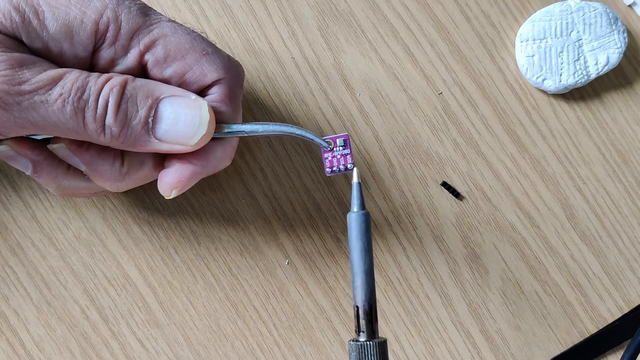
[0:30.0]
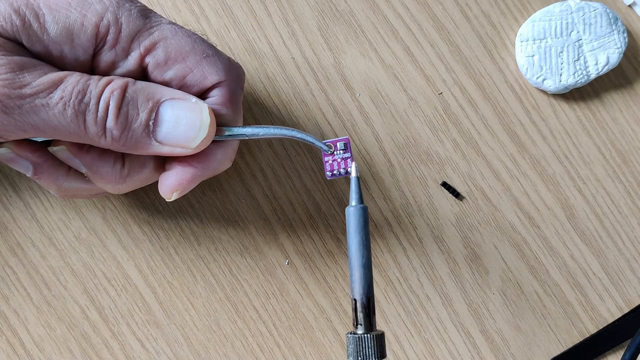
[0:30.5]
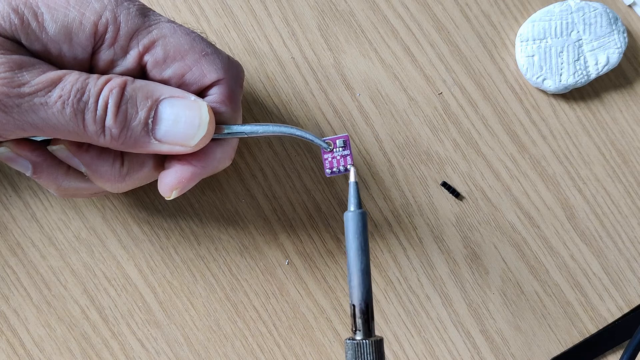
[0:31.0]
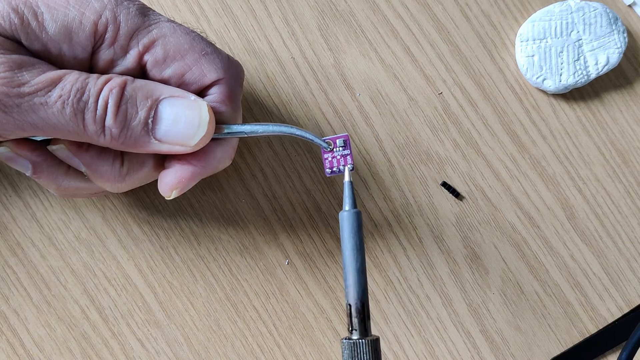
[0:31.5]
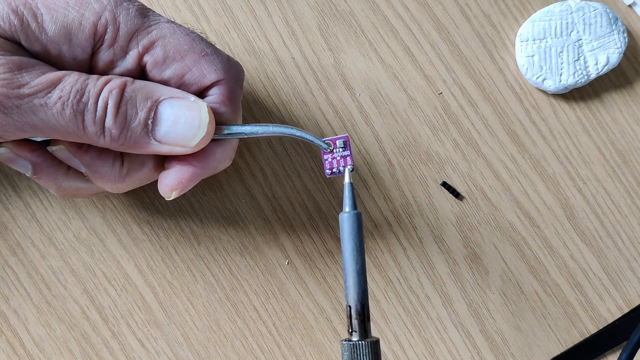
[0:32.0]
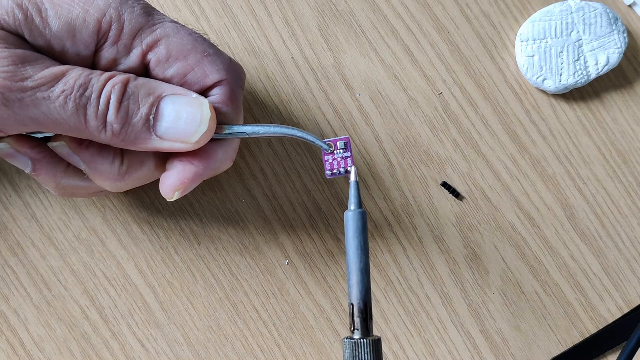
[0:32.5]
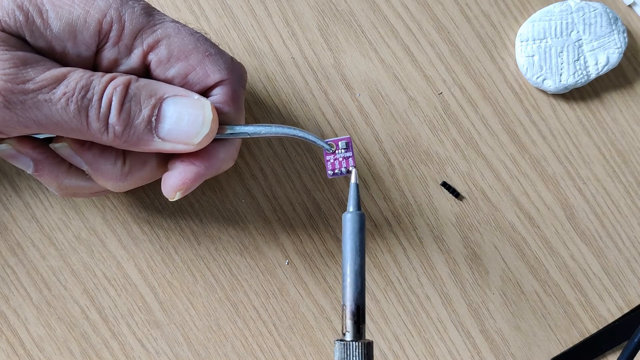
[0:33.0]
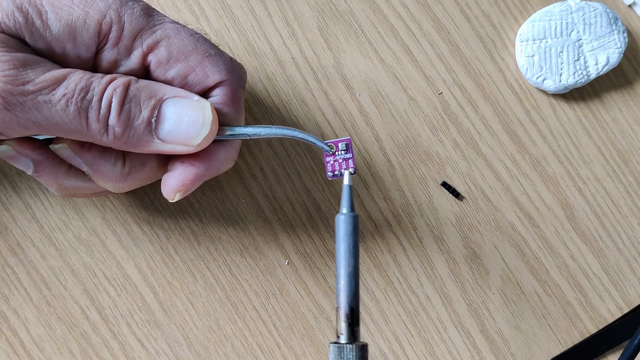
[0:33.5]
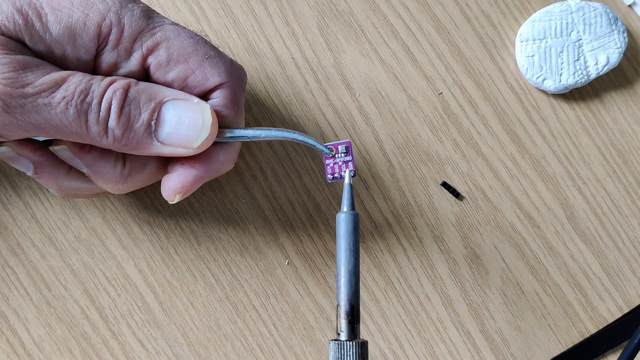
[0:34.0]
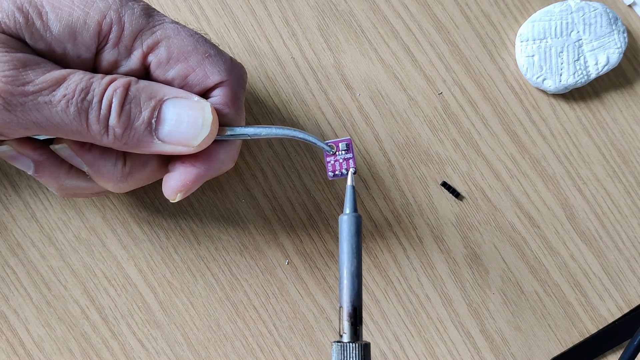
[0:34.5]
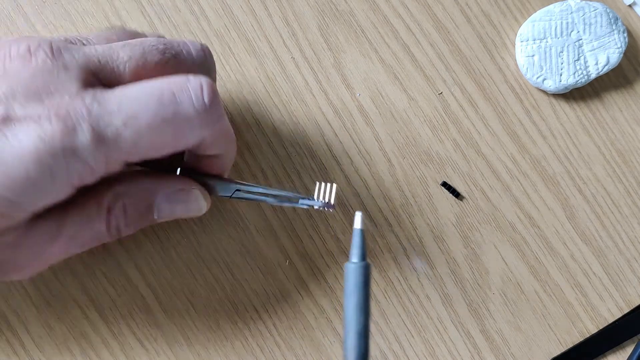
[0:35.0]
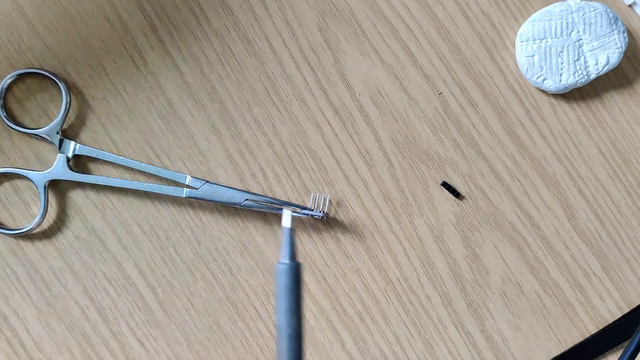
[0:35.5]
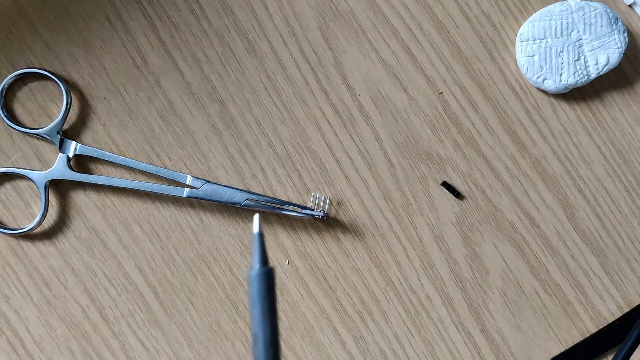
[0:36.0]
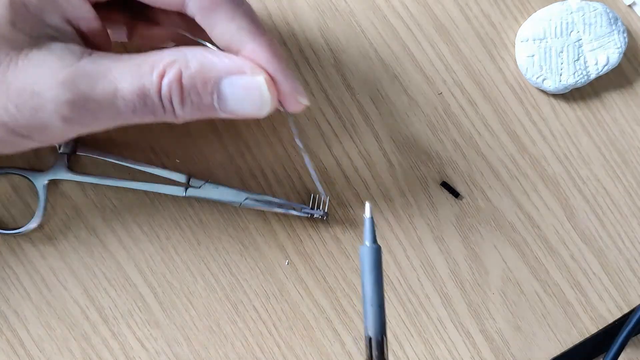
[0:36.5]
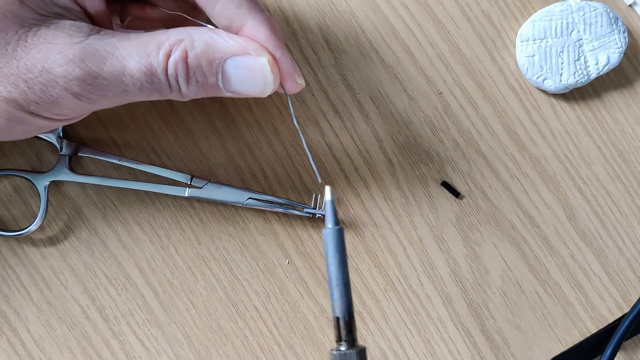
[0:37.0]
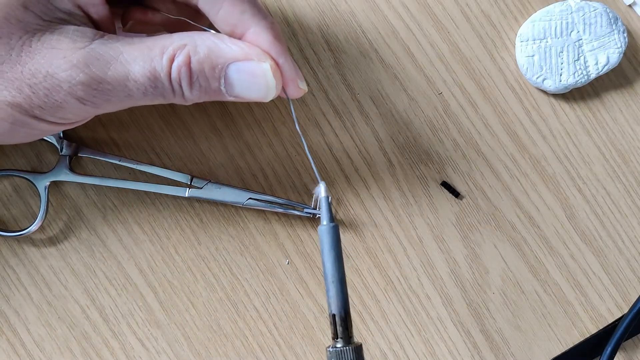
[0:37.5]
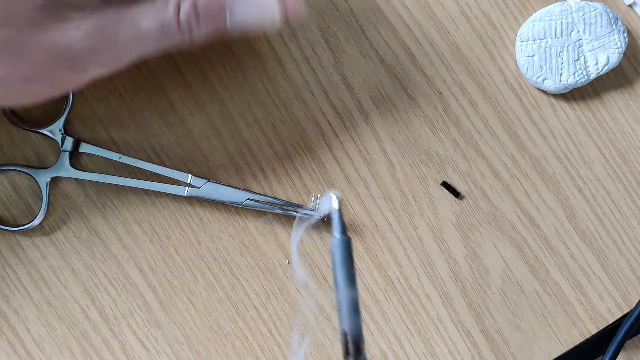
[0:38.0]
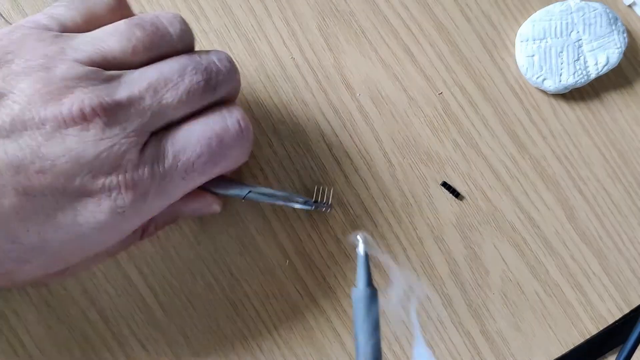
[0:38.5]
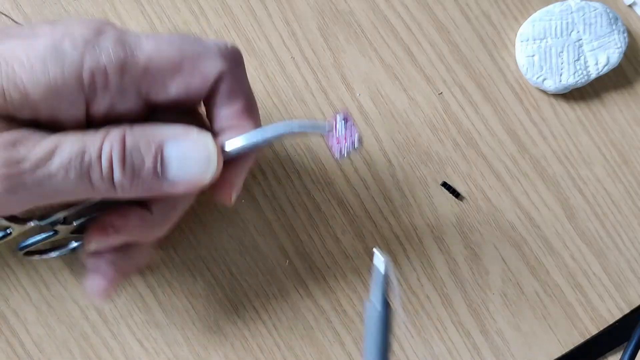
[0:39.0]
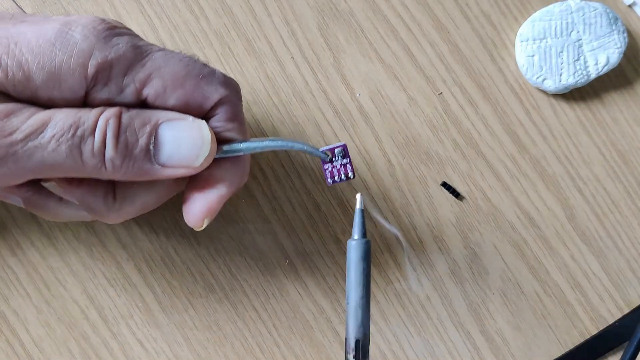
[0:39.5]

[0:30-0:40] Two hands hold a header pin. One hand holds a tweezer to which the header pins are attached, while the other holds something like a heated stick, apparently used to heat the header pins so they can be removed easily. He first tests the heat on some other material, like a soft metal, before moving to the header pins. Once he applies the heat to the header pins, he removes them quickly.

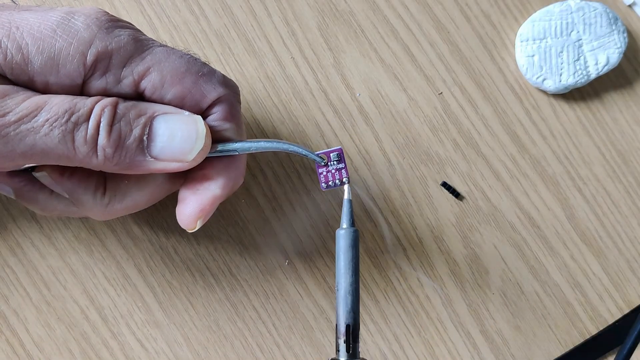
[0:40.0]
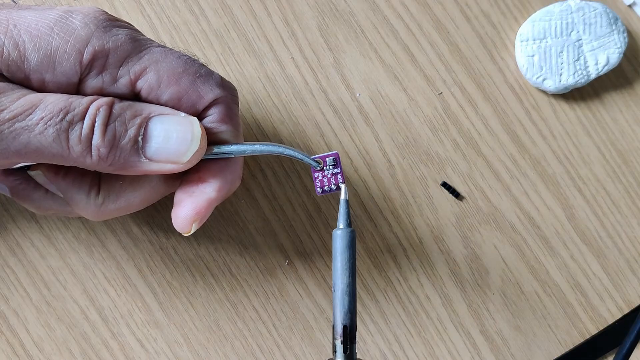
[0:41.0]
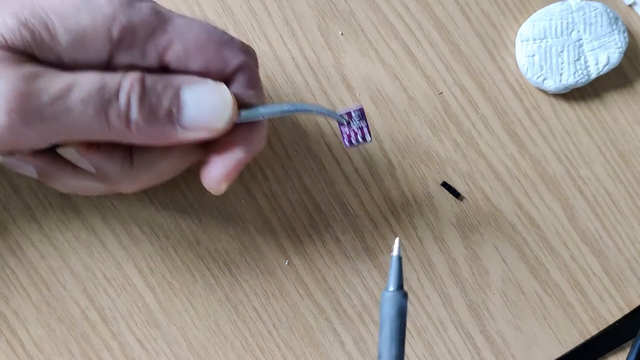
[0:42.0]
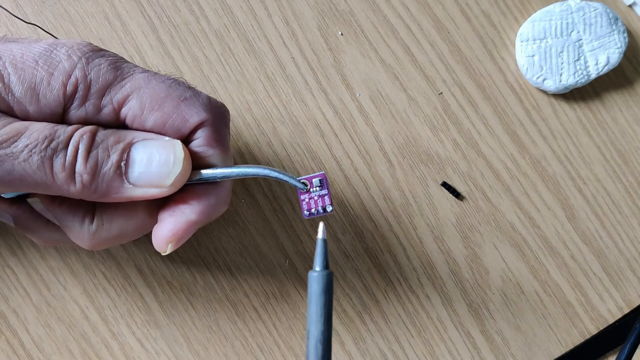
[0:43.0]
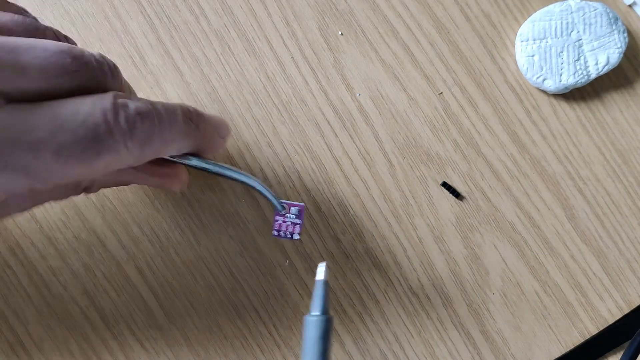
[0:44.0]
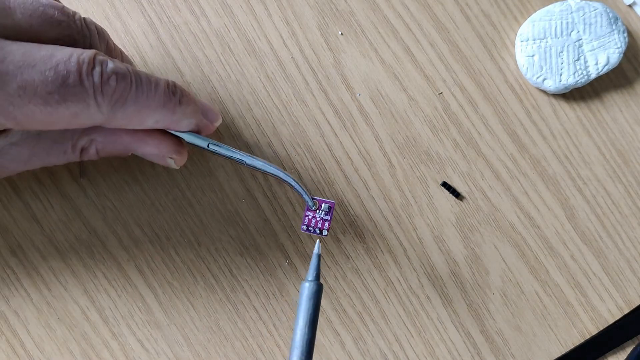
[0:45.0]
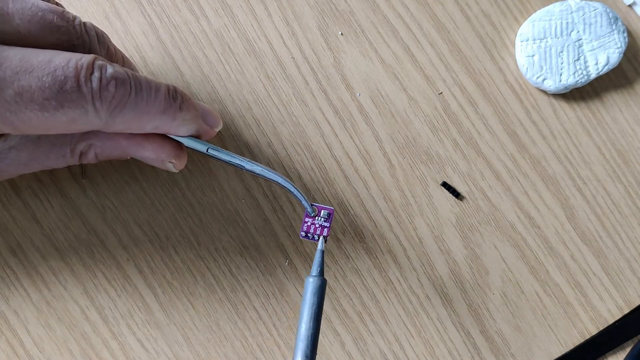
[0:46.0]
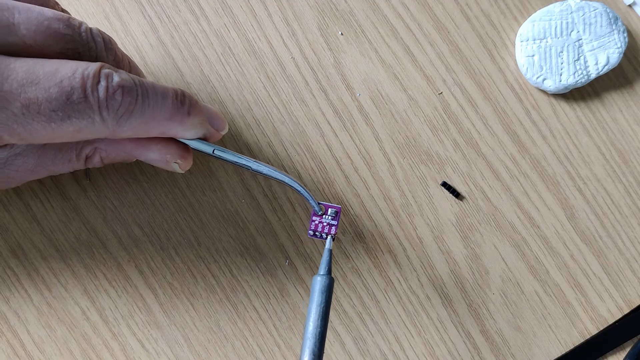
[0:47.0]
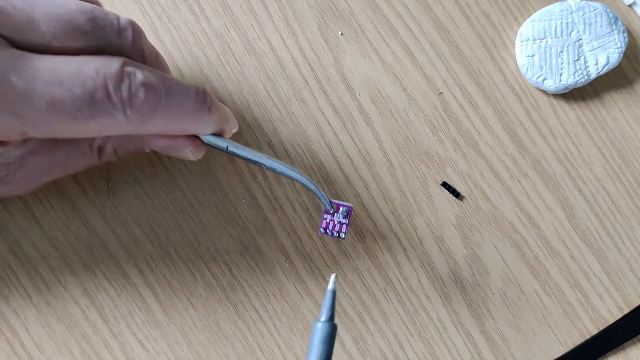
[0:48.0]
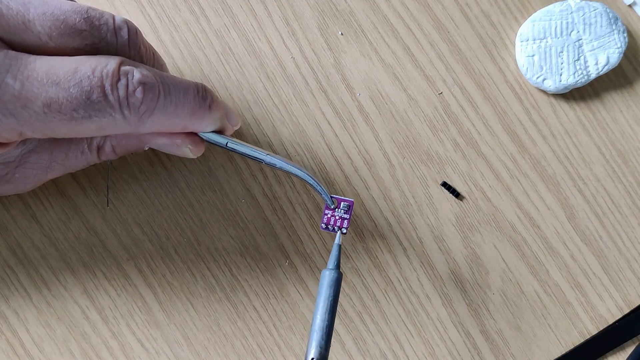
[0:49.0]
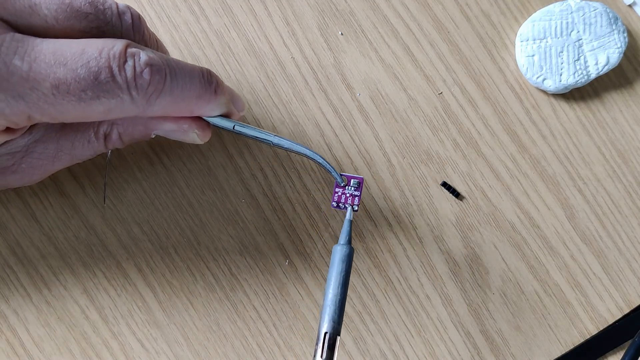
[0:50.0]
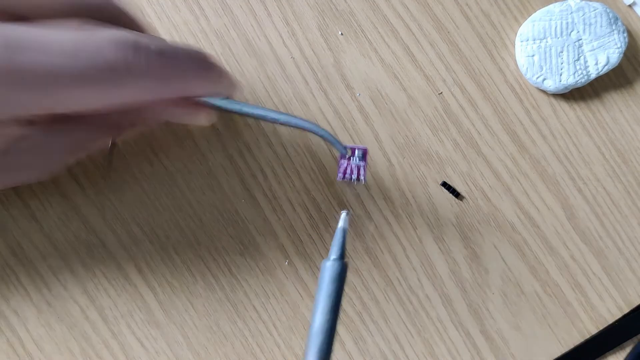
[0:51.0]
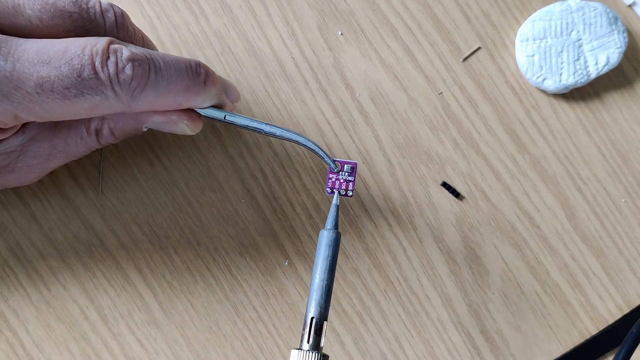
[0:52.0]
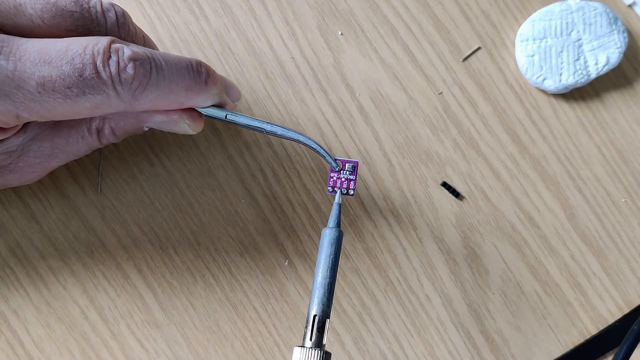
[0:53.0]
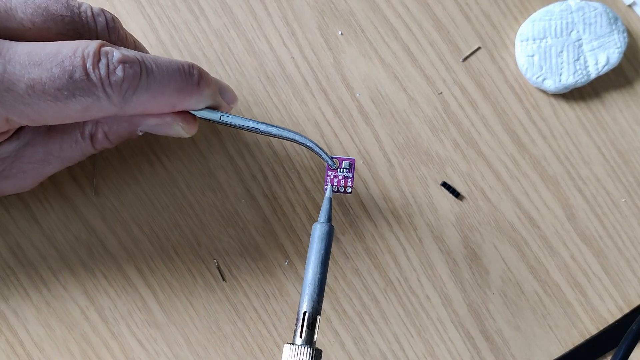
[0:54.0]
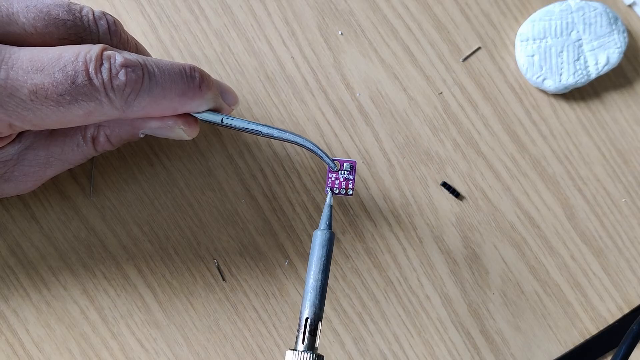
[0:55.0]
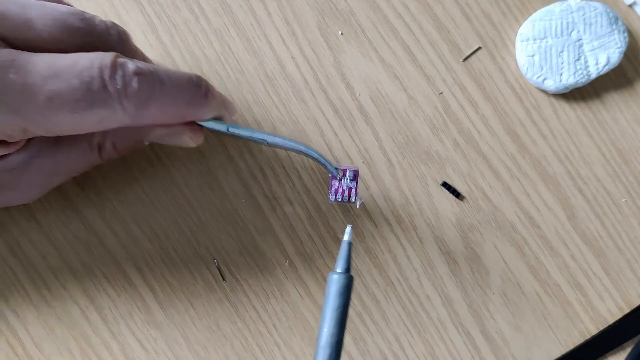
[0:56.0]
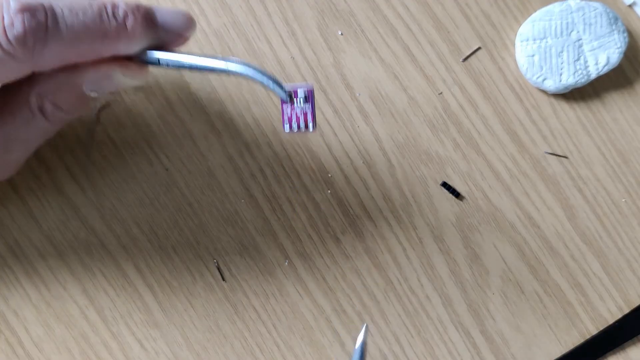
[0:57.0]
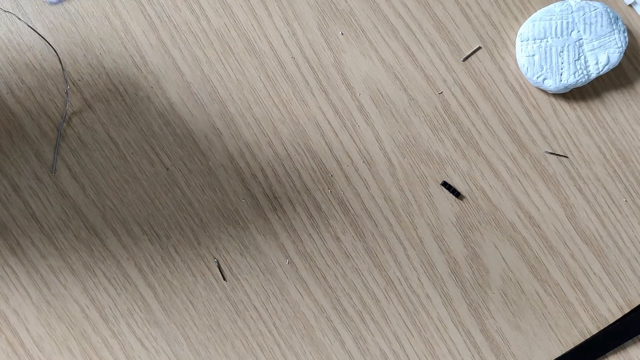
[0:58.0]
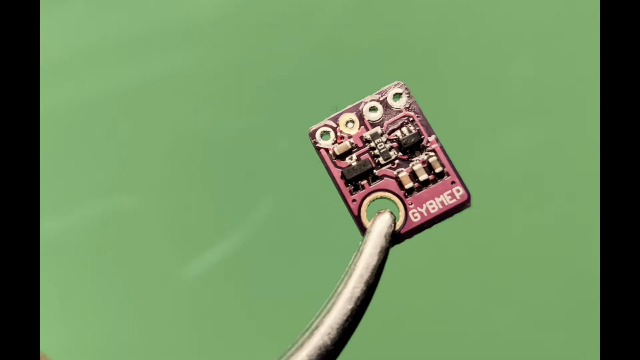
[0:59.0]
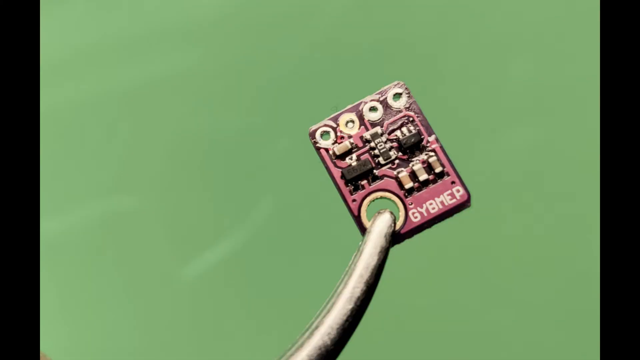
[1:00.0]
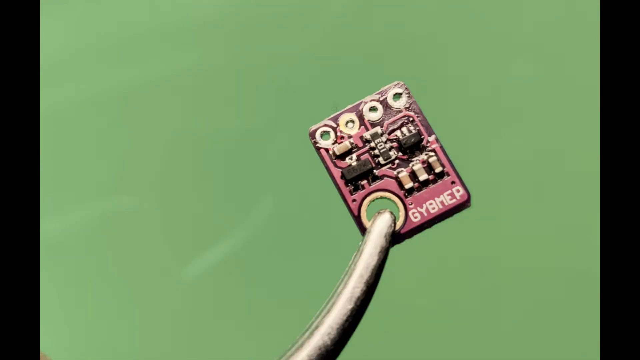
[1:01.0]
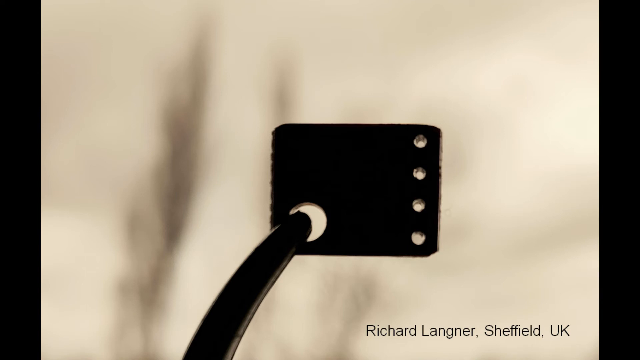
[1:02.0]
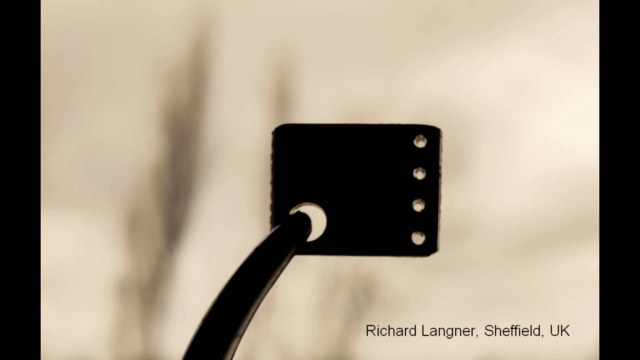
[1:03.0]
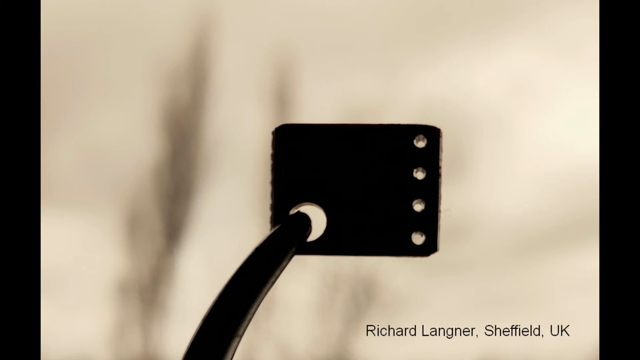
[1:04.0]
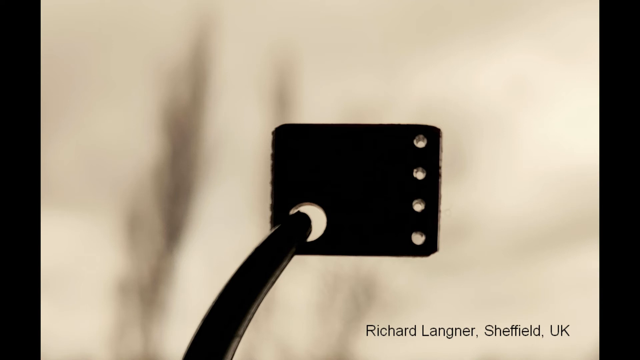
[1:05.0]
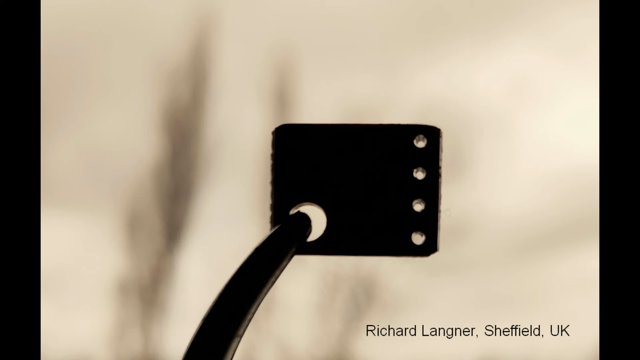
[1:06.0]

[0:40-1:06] The video is titled "how to remove header pins within seconds." Two hands hold a header pin with four pins, and the man struggles to remove them with just a tweezer. He then applies heat using something like a pin that is dispersing heat. First he takes a soft wire to test the heat, then he applies the heat to the header pins one by one, pointing at each pin in turn, and the pins fall one by one. Each pin takes close to 2 seconds to be removed.